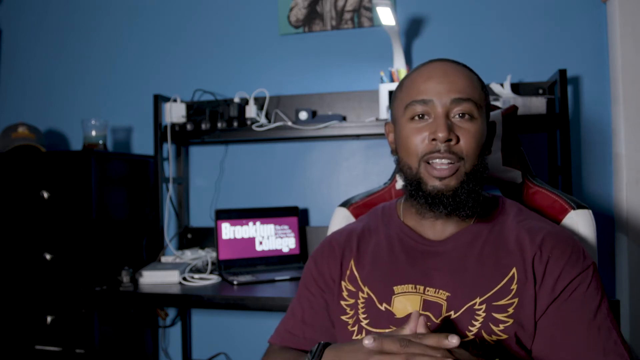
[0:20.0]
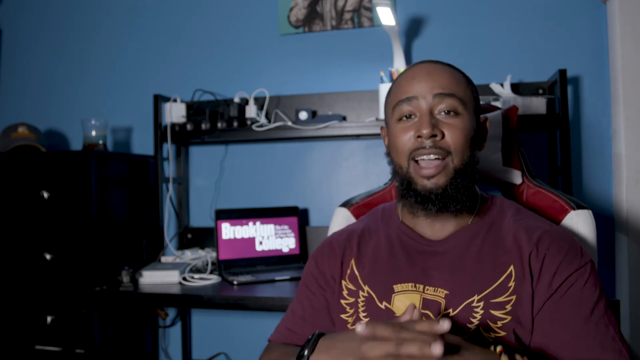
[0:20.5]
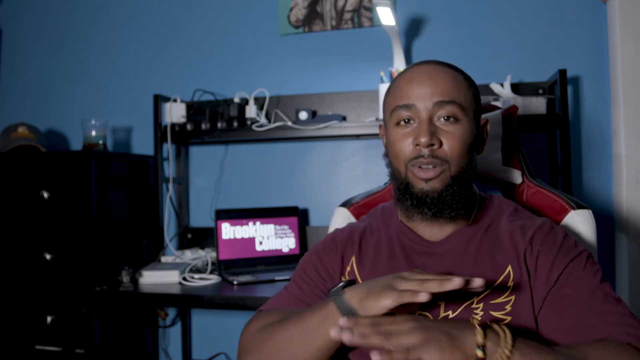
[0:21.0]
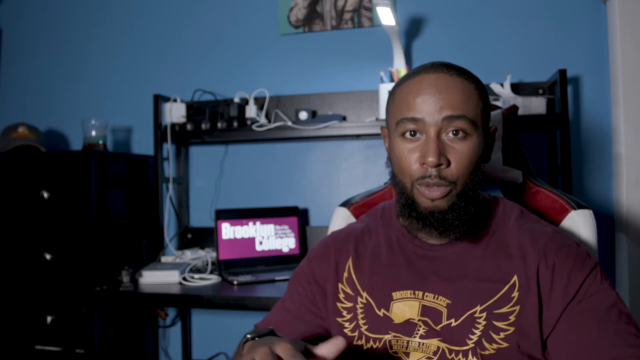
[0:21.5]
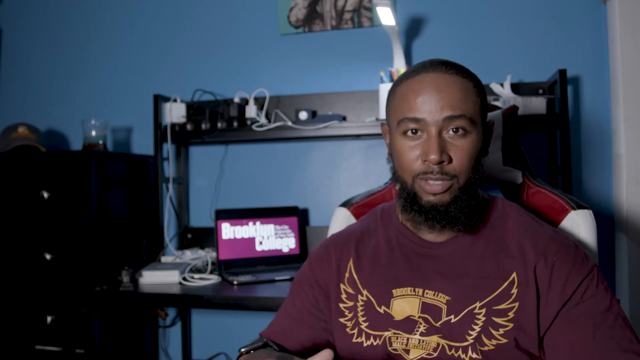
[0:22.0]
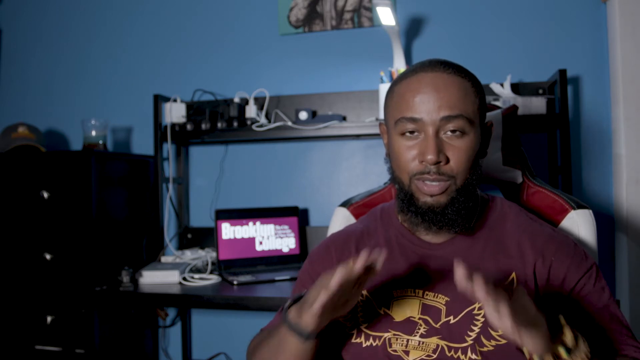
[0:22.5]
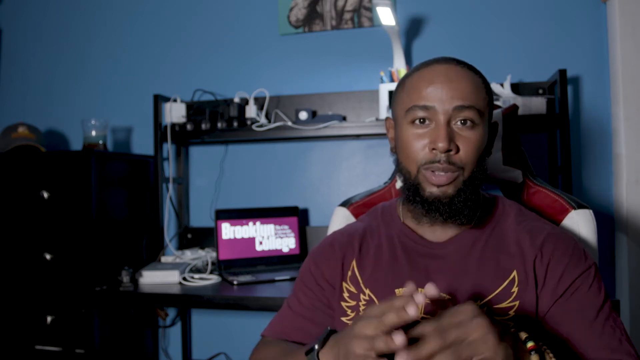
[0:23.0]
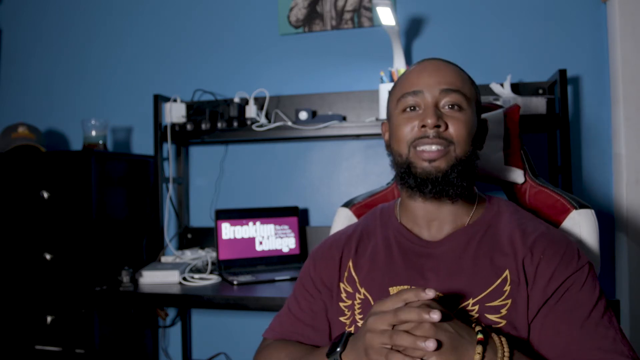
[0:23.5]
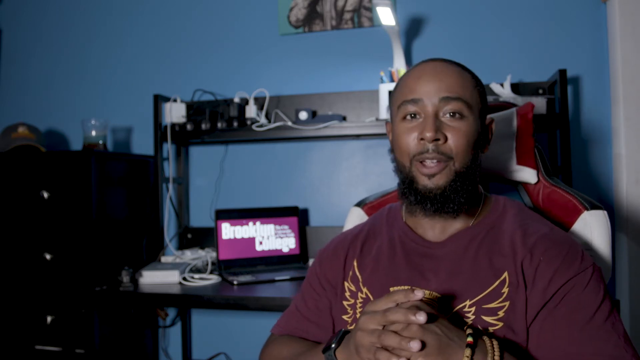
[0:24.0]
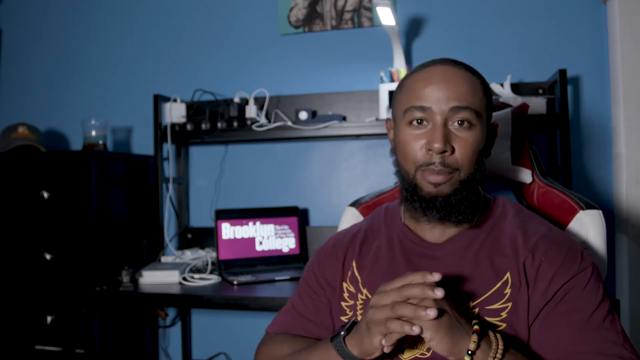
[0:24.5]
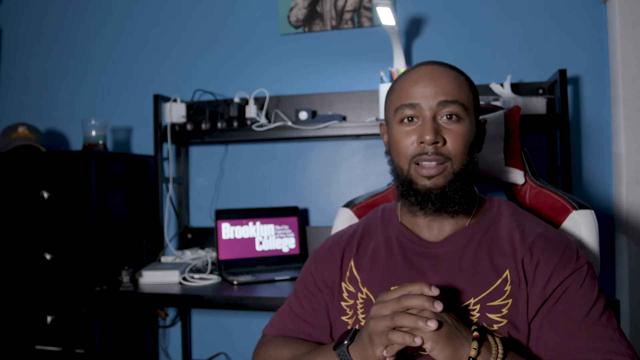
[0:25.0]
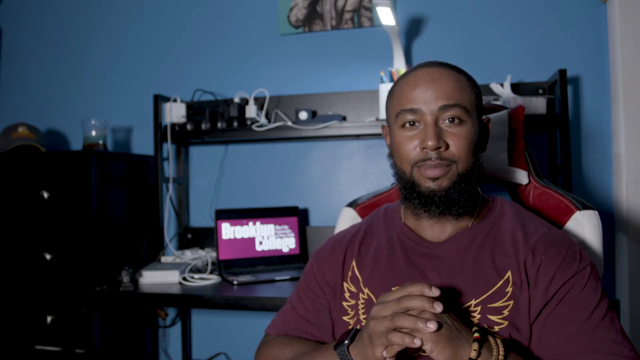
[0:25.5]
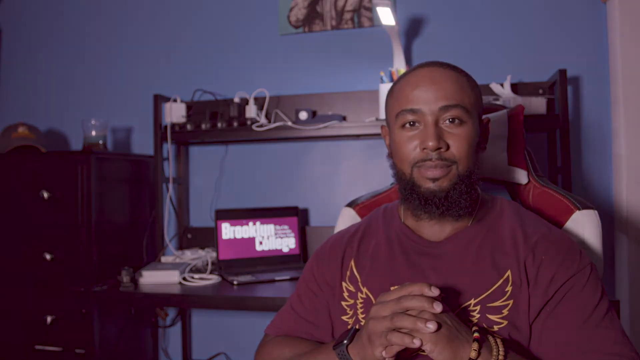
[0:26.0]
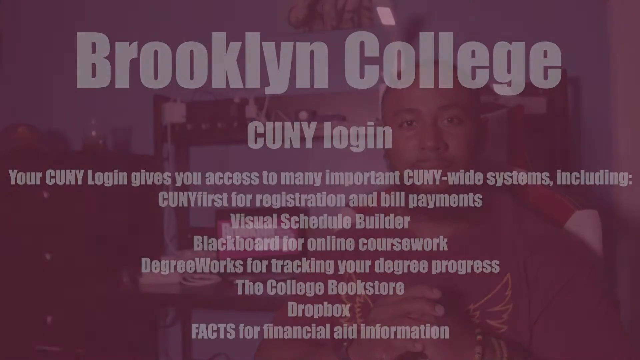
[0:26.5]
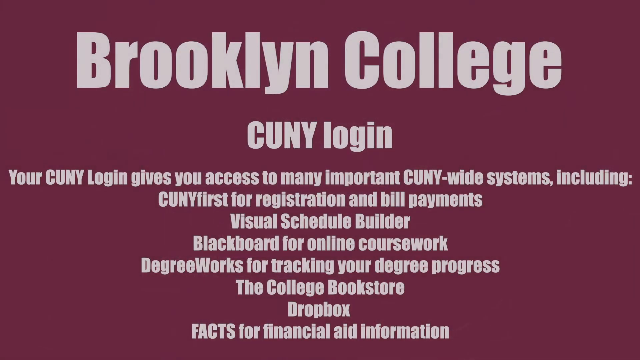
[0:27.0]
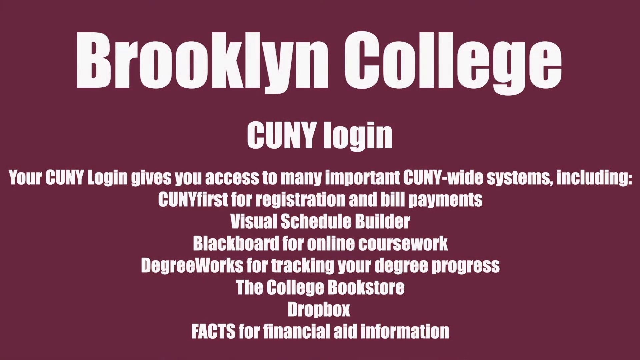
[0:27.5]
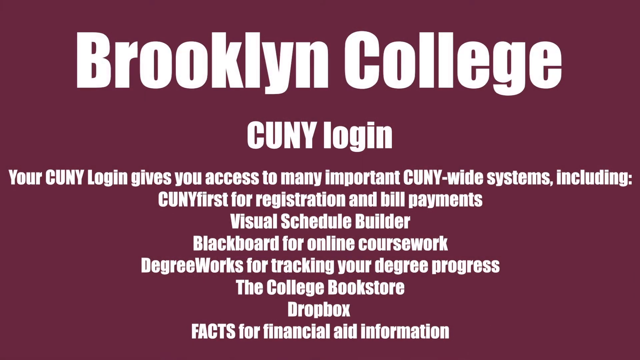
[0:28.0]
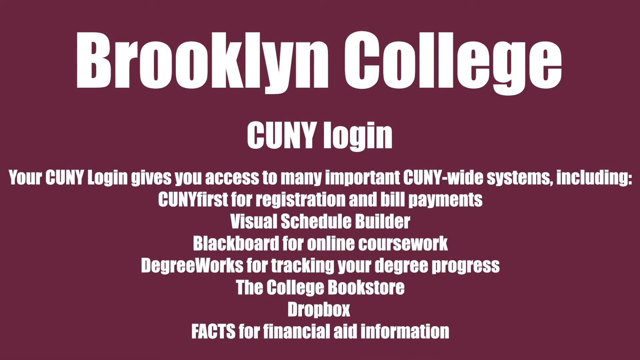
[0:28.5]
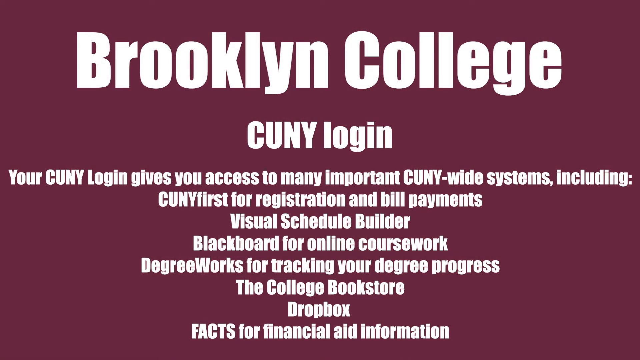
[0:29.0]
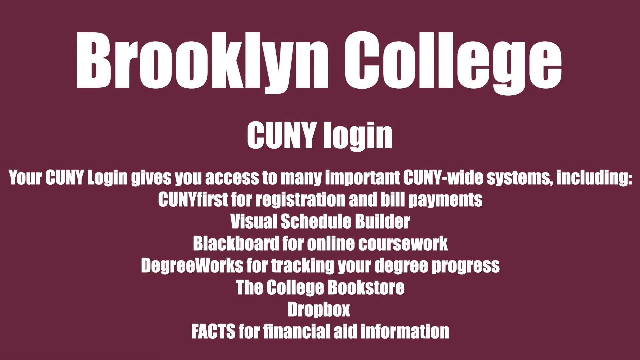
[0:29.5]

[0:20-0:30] The man continues to talk. After a bit, what looks to be an ad for Brooklyn College appears: a static picture that fades in after his introductory speech. At the very top, in very large letters, it reads "Brooklyn College." Below that it says "CUNY login" and "Your CUNY login gives you access to many important CUNY wide systems, including CUNY First for registration and bill payments," followed by some other text.